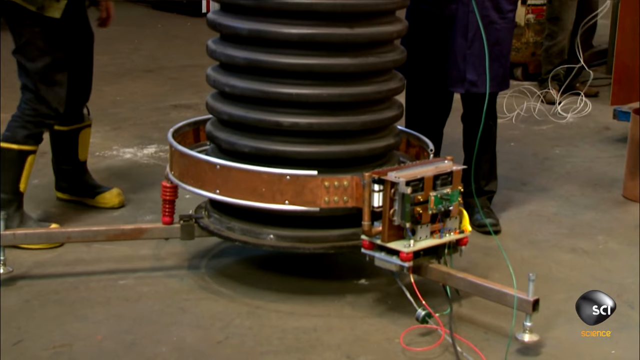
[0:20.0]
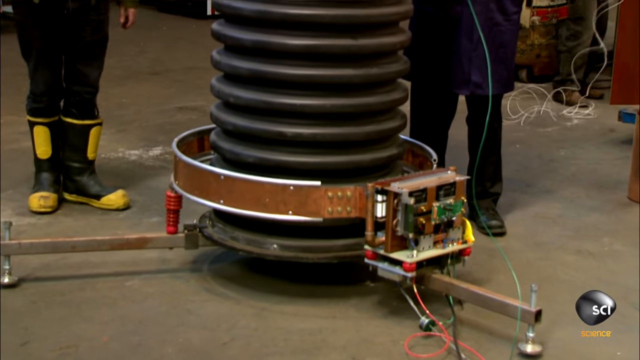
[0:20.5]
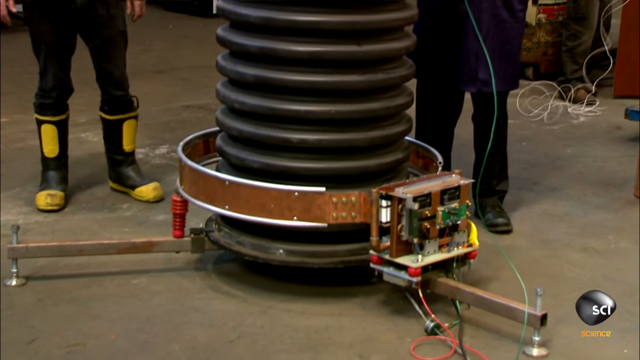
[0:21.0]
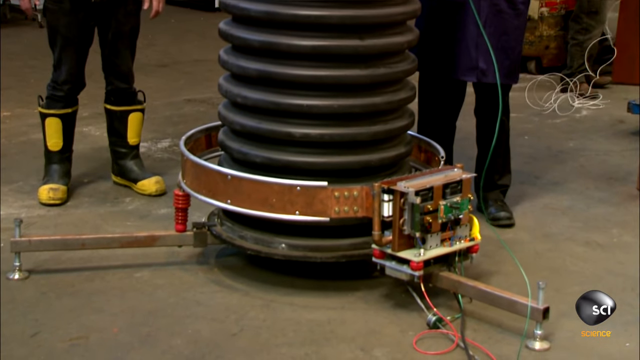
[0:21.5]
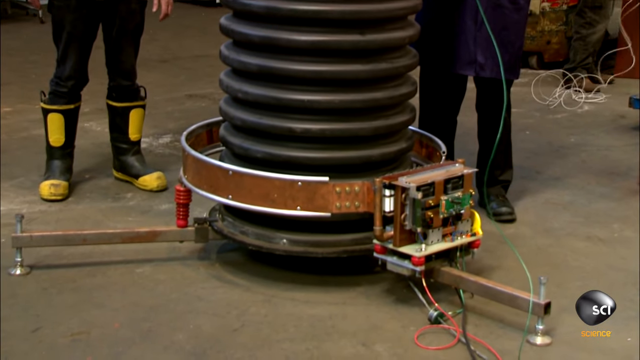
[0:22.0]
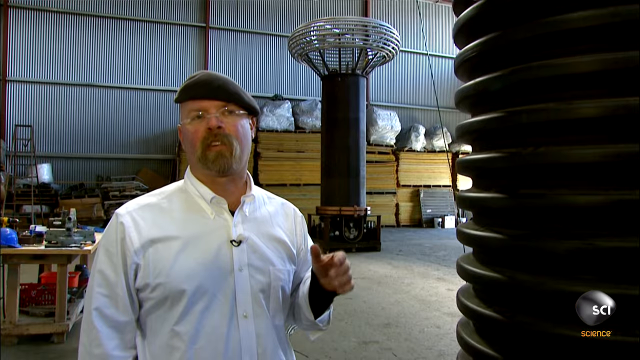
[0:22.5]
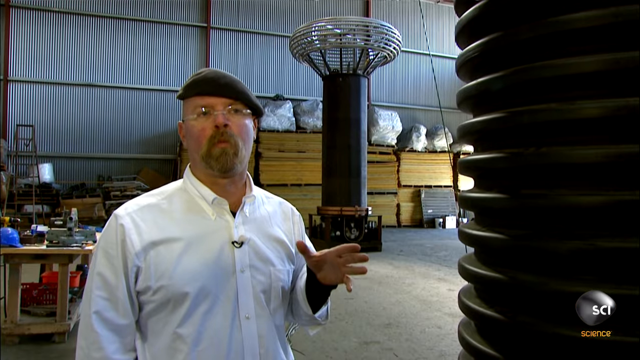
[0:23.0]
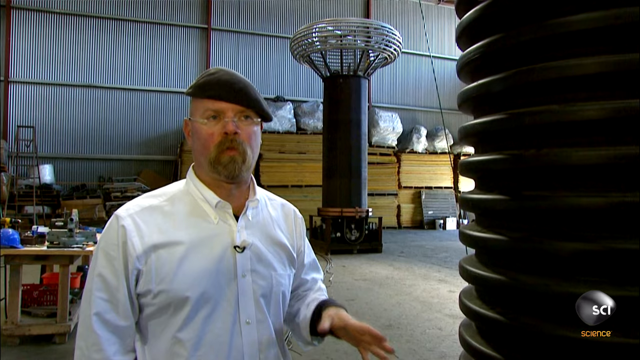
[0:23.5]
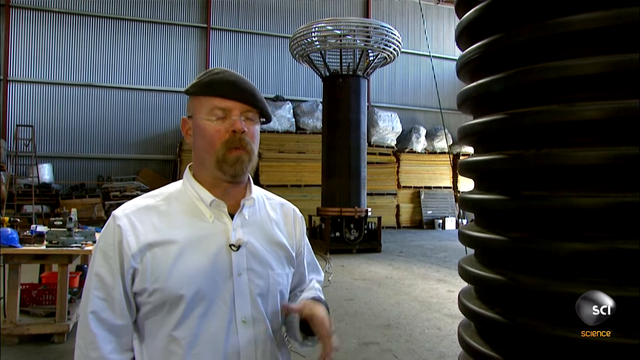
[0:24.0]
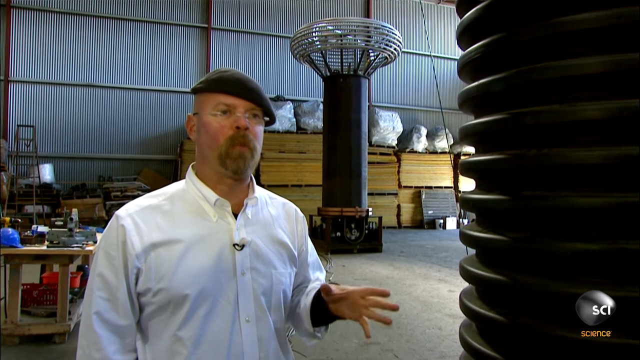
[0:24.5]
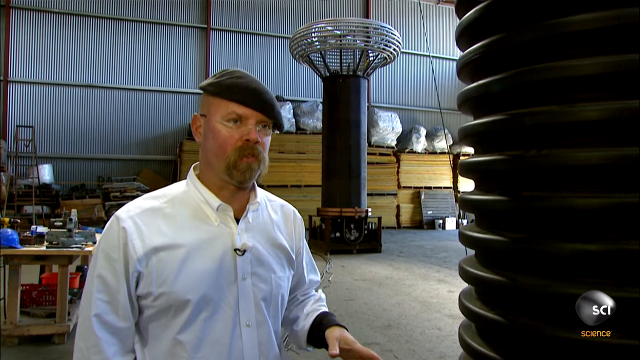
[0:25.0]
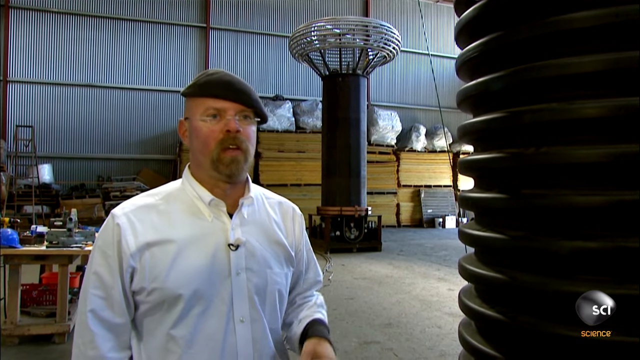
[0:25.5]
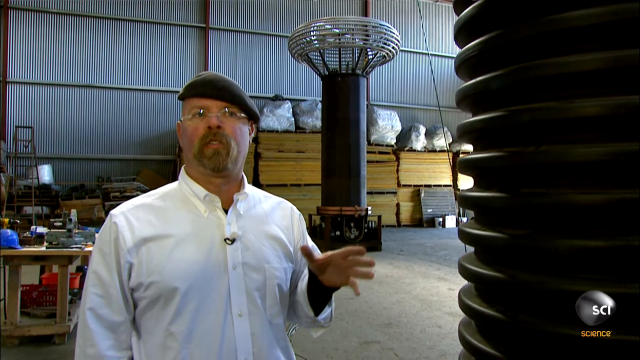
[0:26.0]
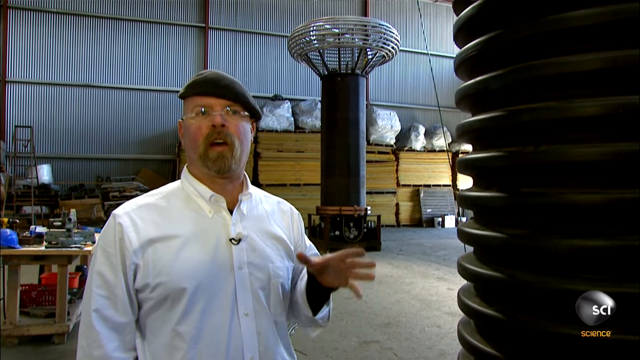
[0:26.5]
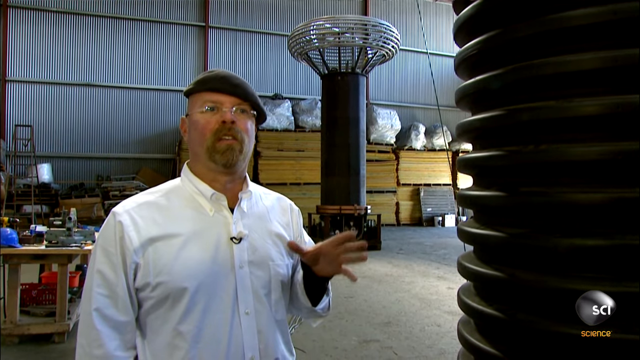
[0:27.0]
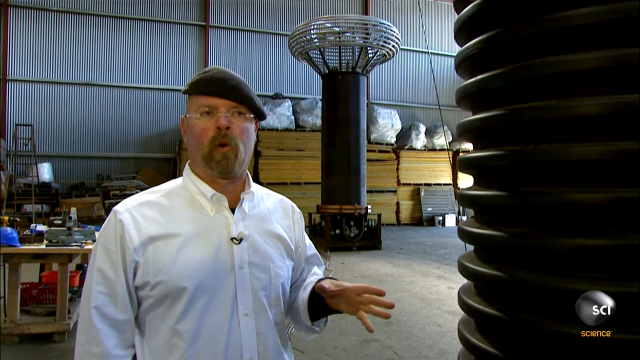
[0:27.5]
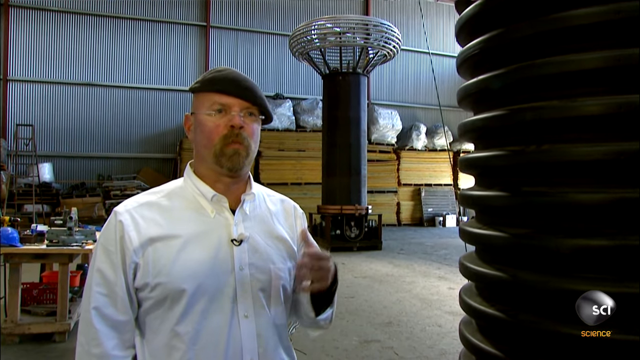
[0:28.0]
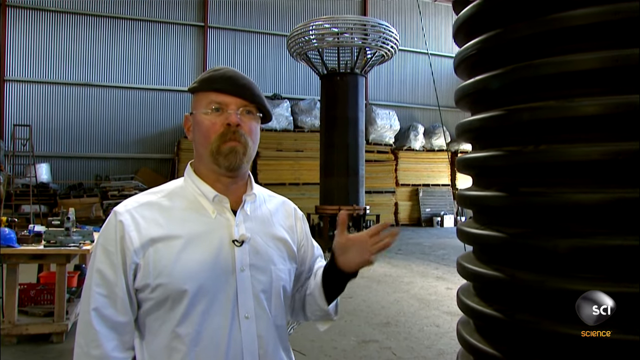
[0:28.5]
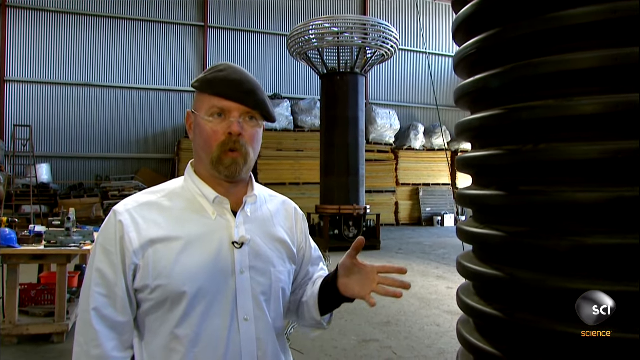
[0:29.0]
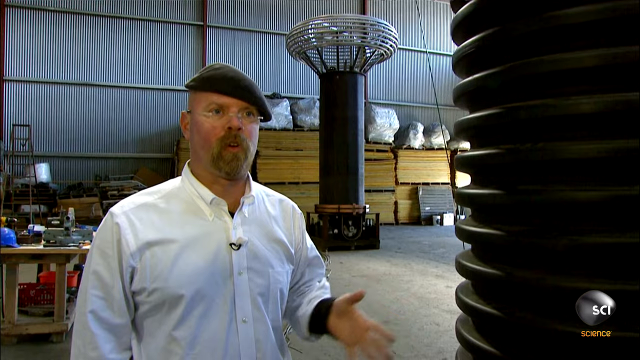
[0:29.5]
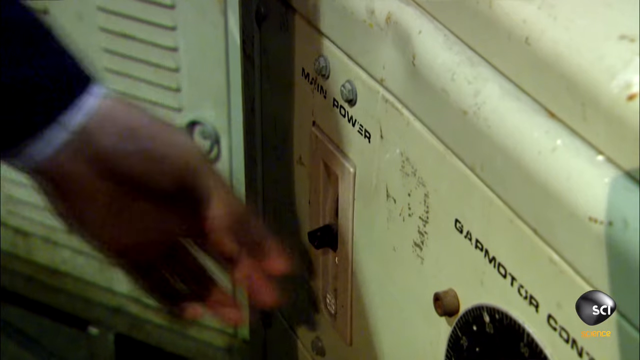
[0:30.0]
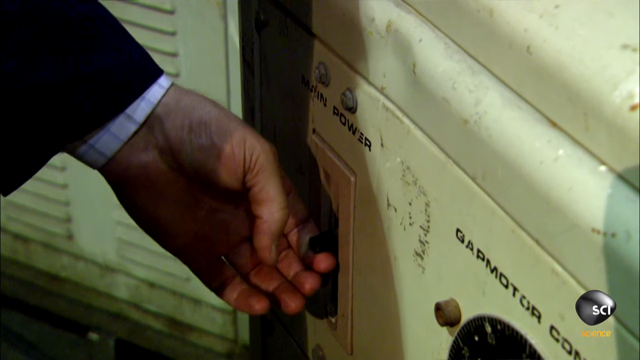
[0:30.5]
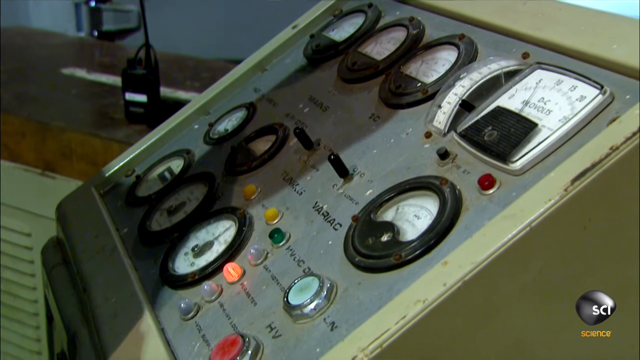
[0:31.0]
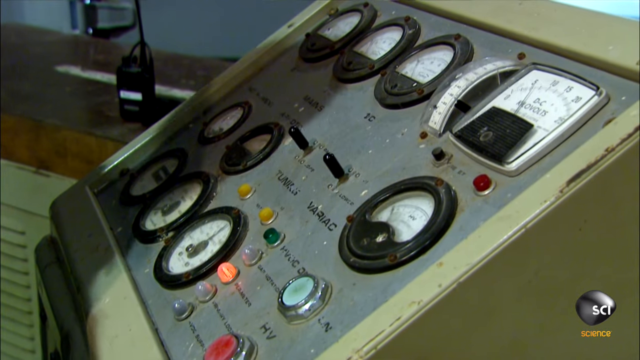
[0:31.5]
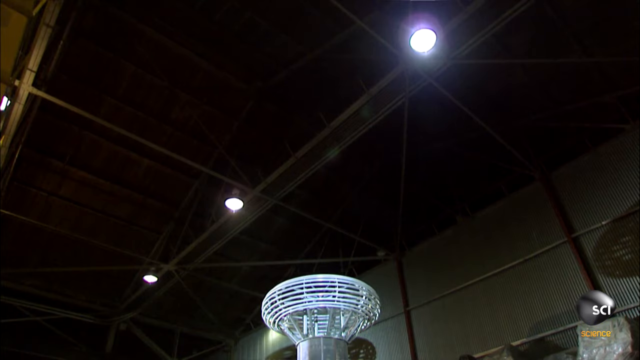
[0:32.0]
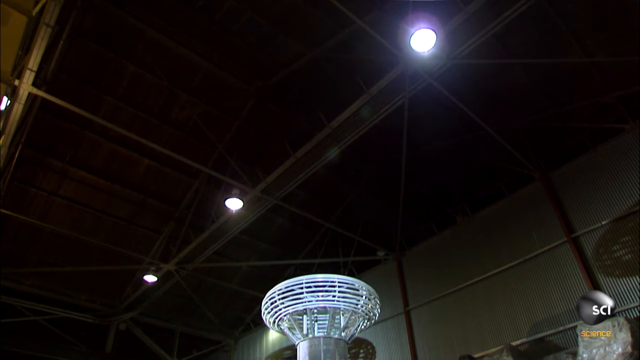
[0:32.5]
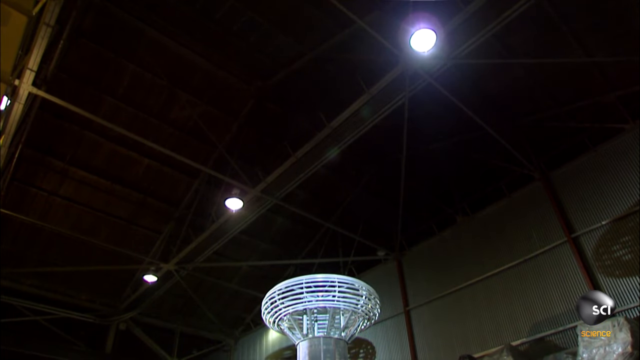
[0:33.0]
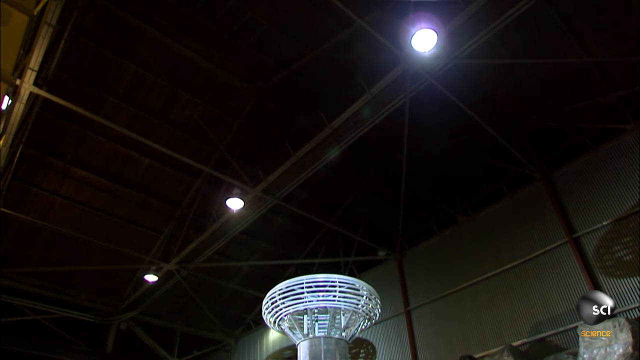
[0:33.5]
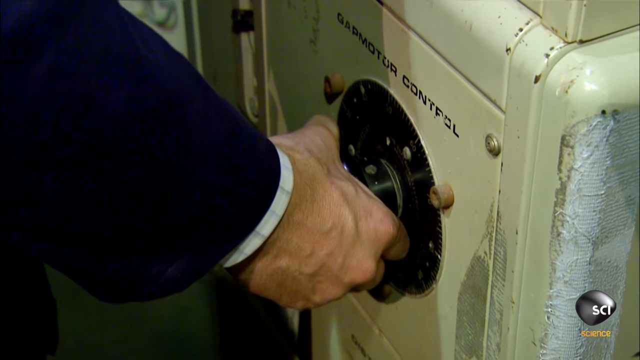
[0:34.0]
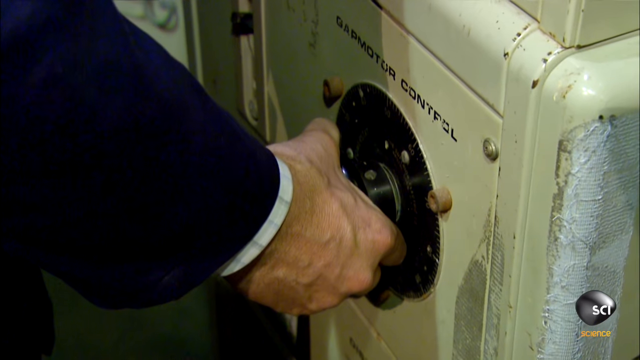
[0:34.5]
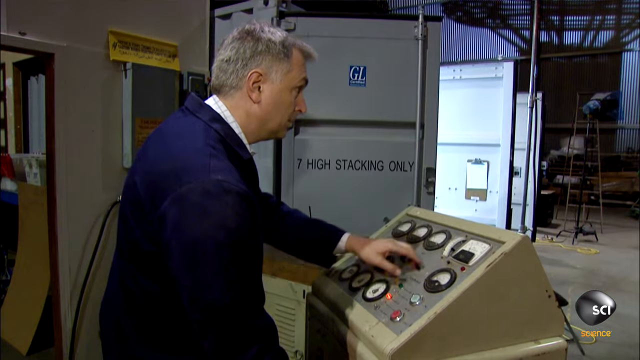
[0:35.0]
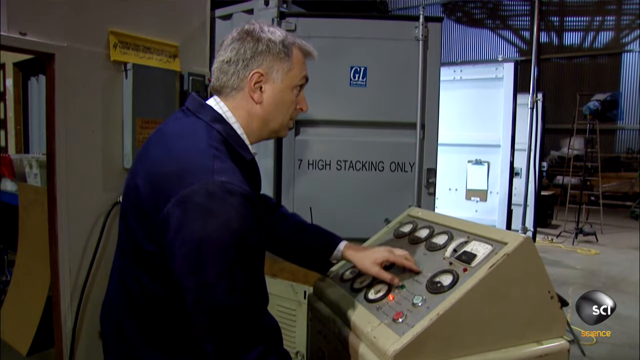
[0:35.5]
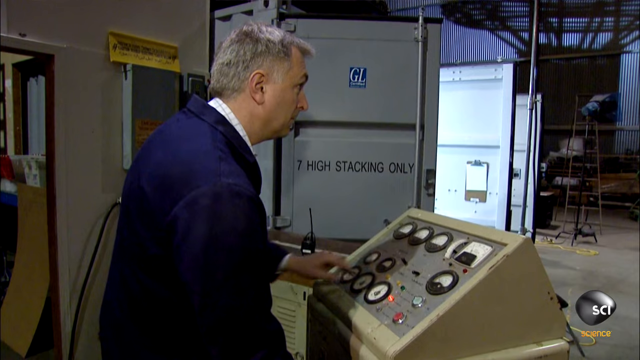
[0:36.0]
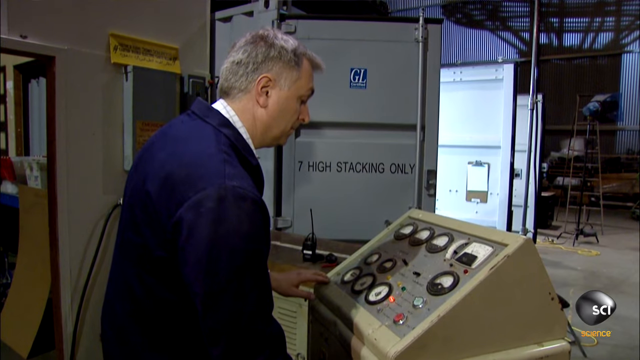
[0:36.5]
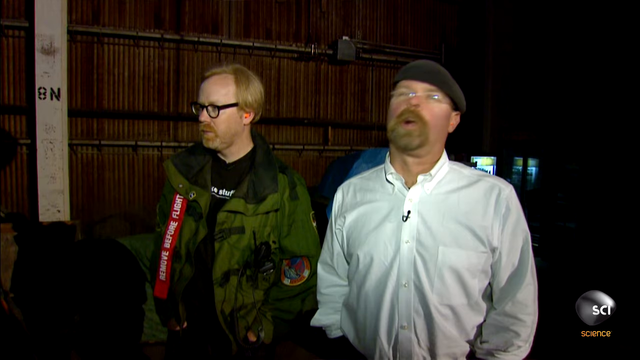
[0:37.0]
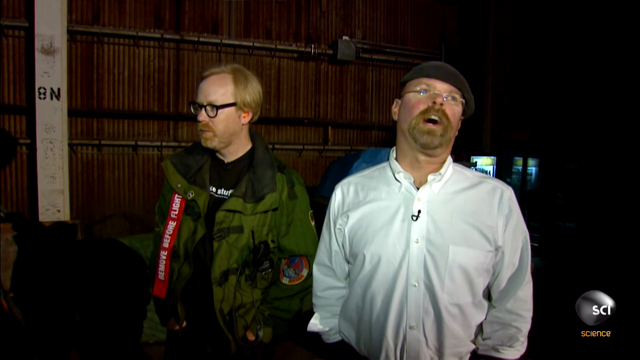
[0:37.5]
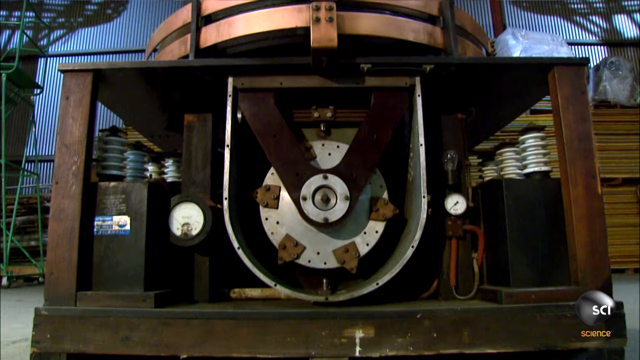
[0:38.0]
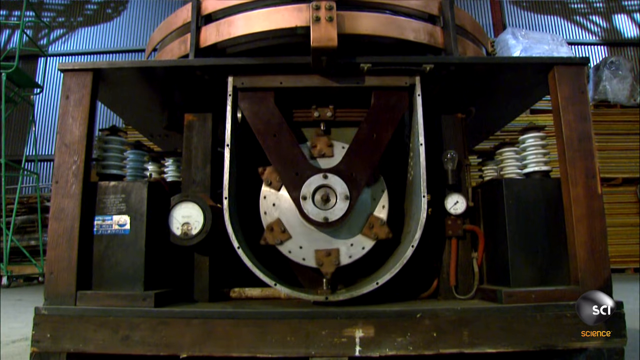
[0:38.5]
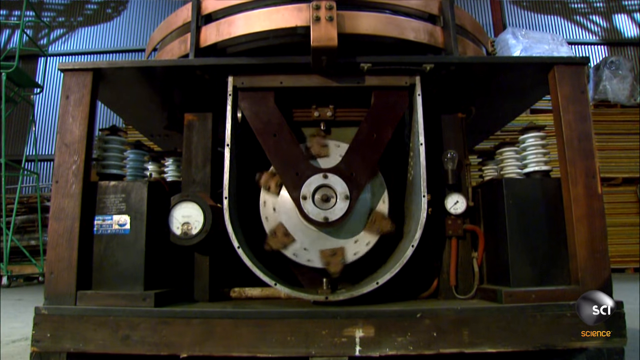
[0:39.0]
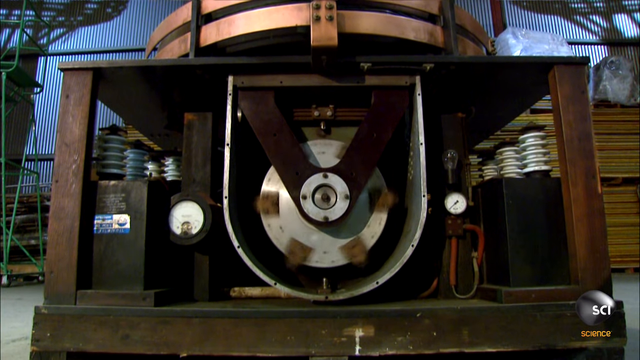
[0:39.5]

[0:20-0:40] The bottom of the contraption is visible. Someone wearing yellow and black boots sets the contraption down onto the ground. The co-host in the hat talks. There is some kind of control machine, and something is spinning around. The machine does not look current; it looks like something from the 60s or 70s. The younger co-host is wearing what looks like a green coat with some red. Both co-hosts stand away from the machine; one looks straight ahead and the other looks up. The machine is pretty big, and something in its middle is spinning around.